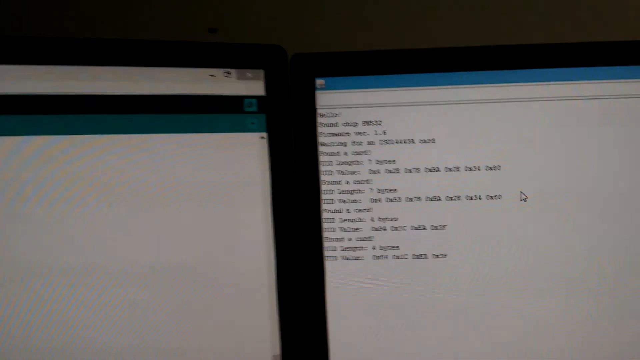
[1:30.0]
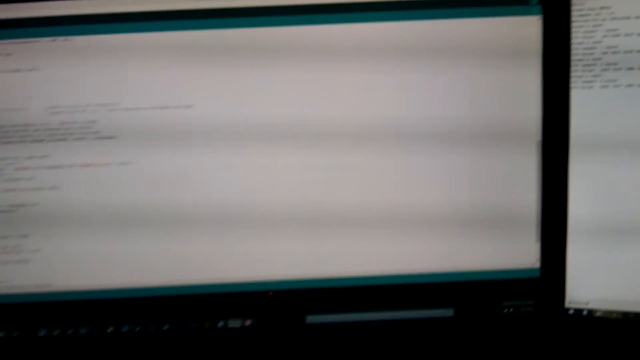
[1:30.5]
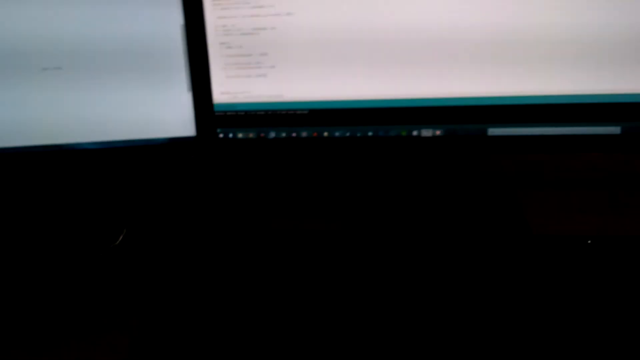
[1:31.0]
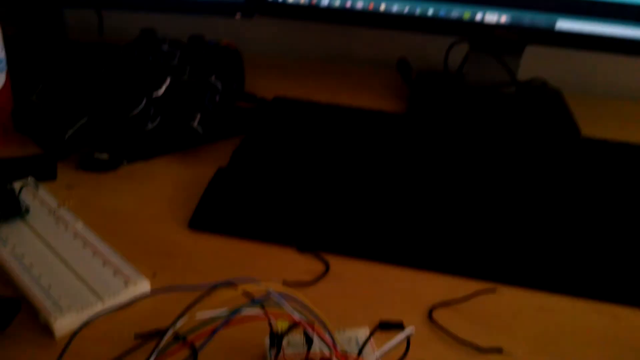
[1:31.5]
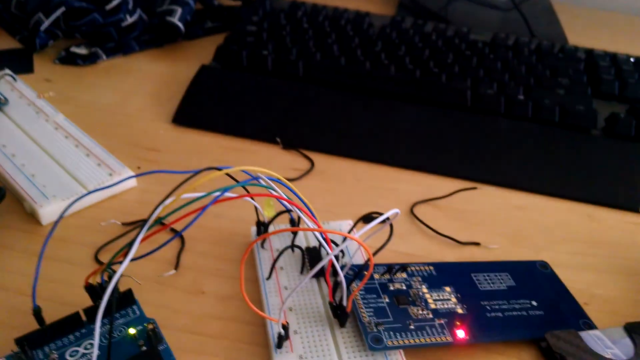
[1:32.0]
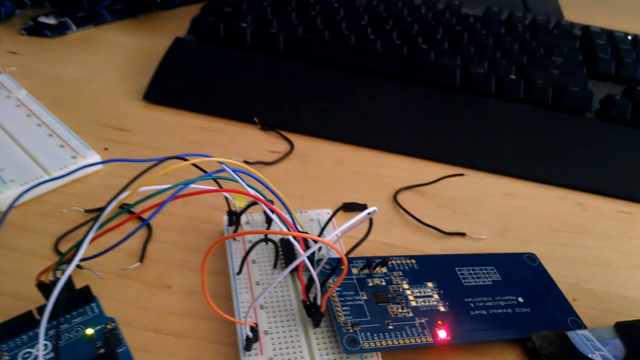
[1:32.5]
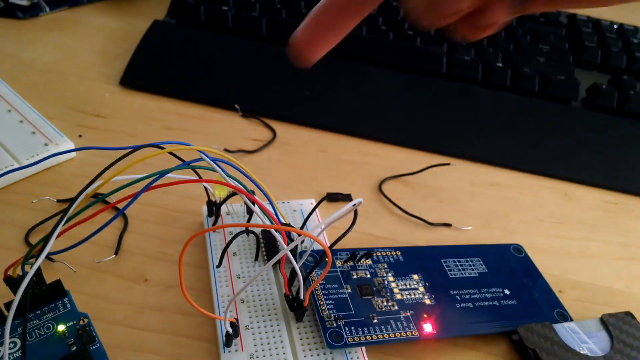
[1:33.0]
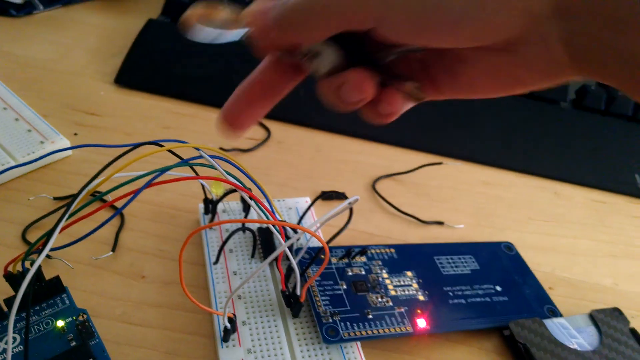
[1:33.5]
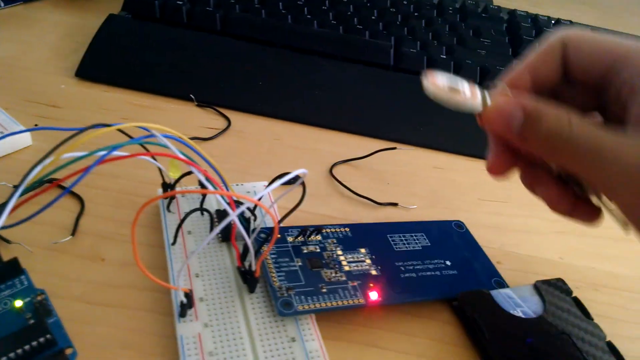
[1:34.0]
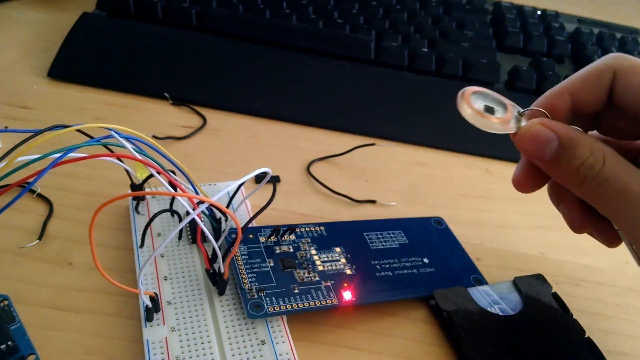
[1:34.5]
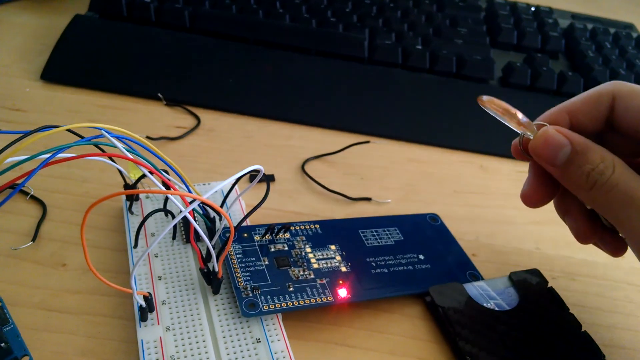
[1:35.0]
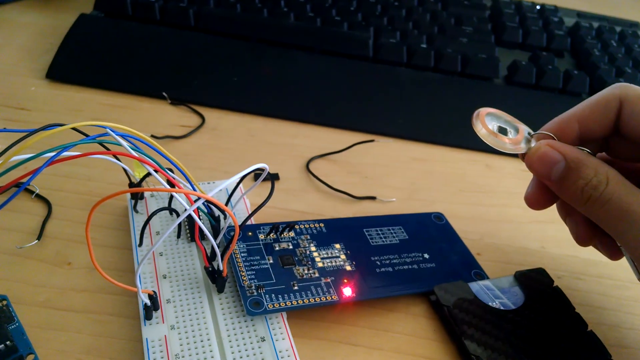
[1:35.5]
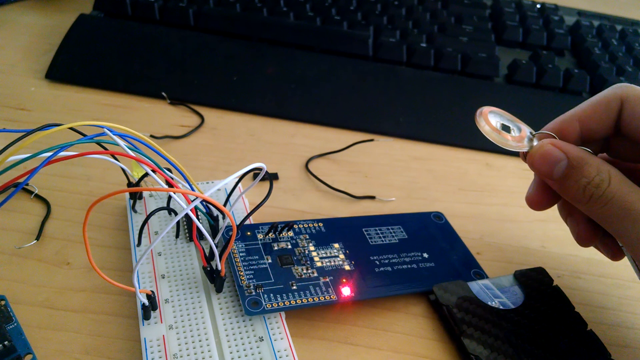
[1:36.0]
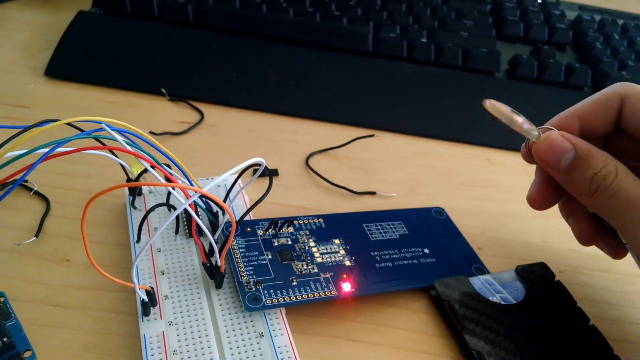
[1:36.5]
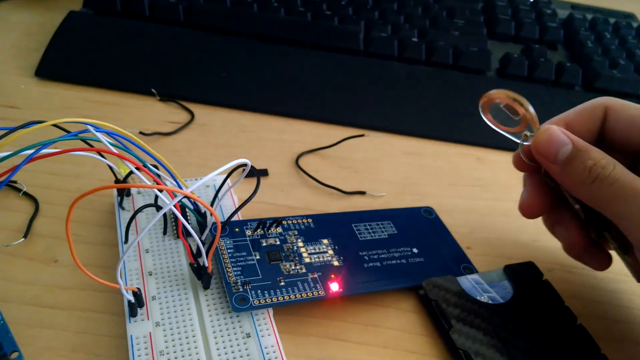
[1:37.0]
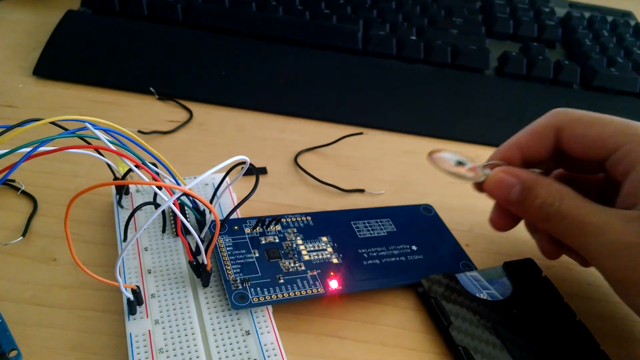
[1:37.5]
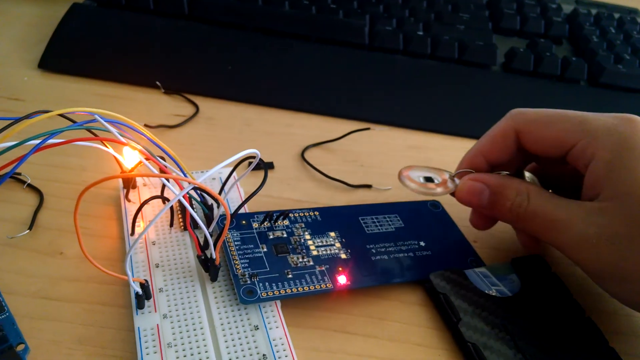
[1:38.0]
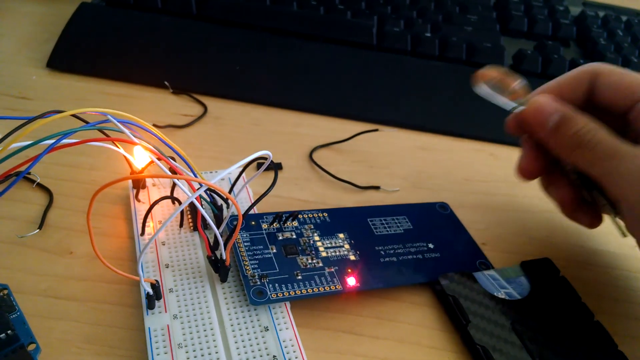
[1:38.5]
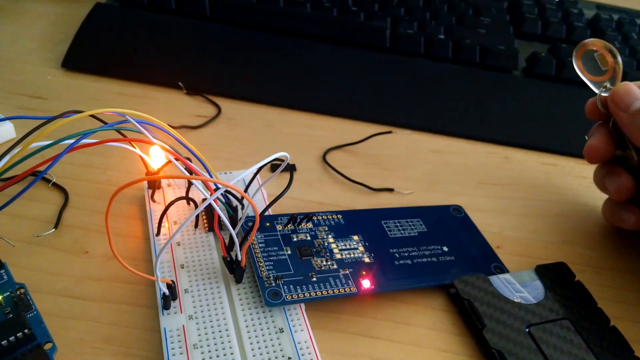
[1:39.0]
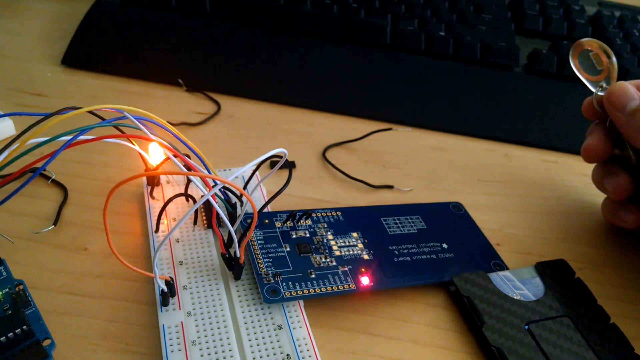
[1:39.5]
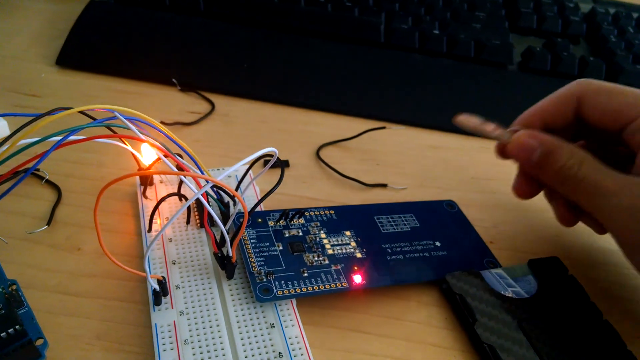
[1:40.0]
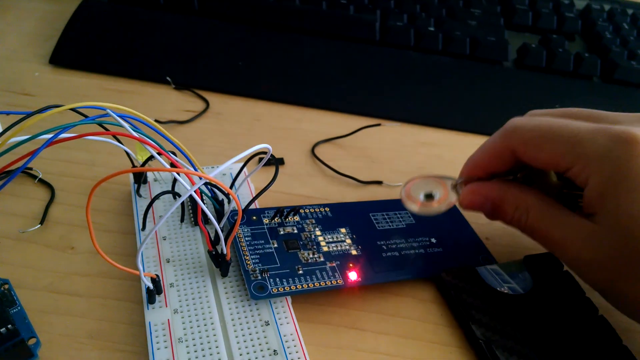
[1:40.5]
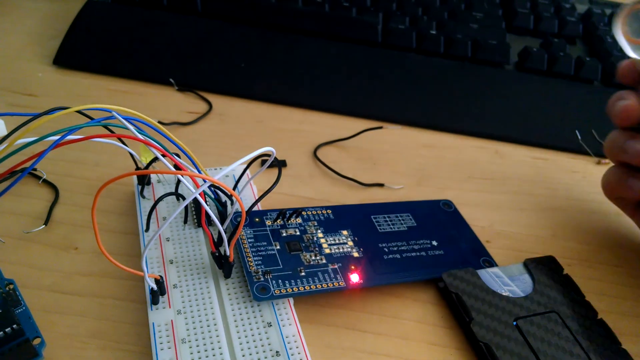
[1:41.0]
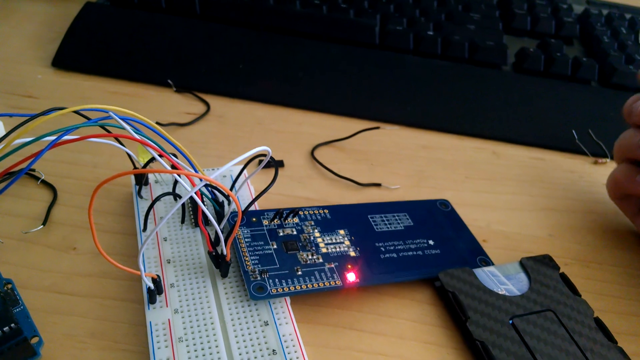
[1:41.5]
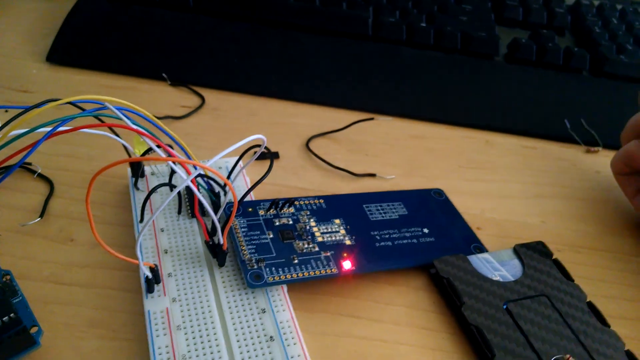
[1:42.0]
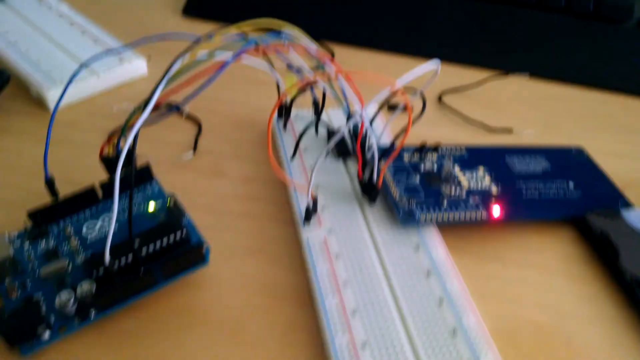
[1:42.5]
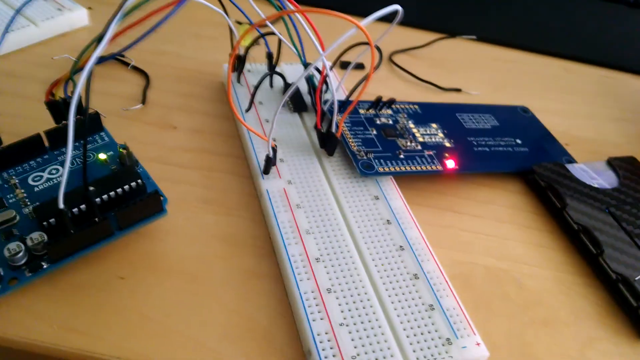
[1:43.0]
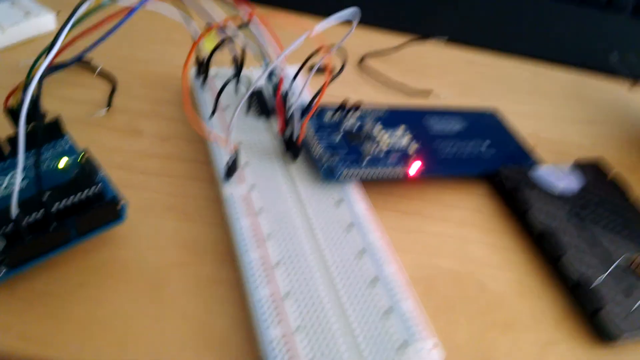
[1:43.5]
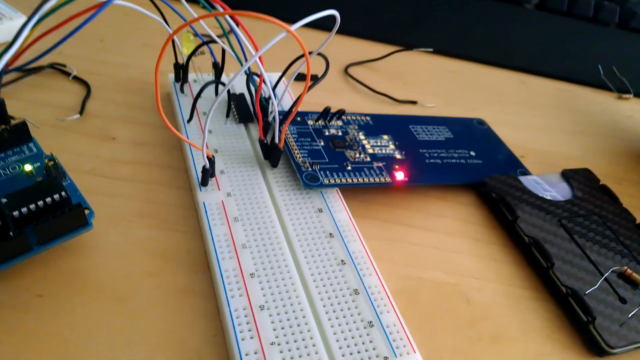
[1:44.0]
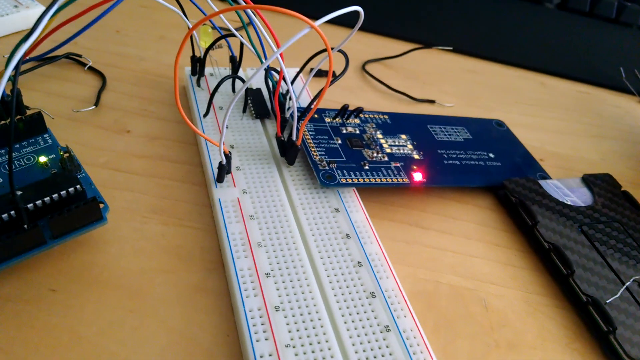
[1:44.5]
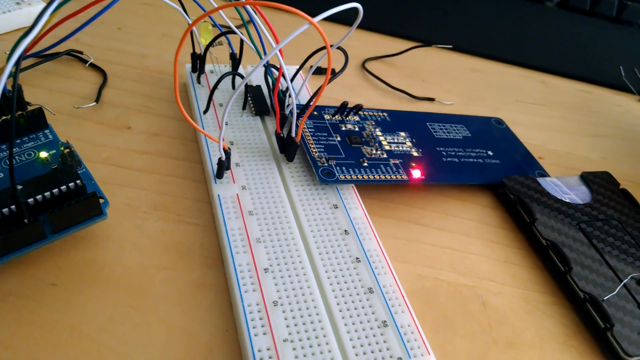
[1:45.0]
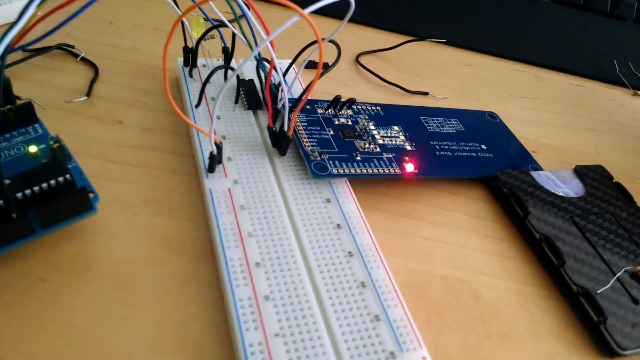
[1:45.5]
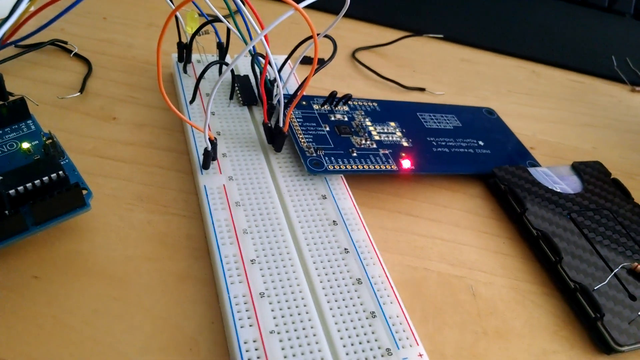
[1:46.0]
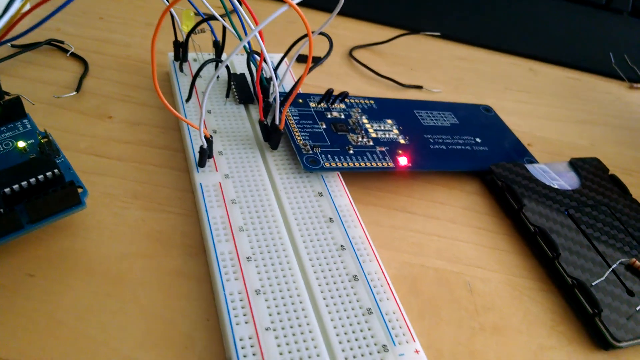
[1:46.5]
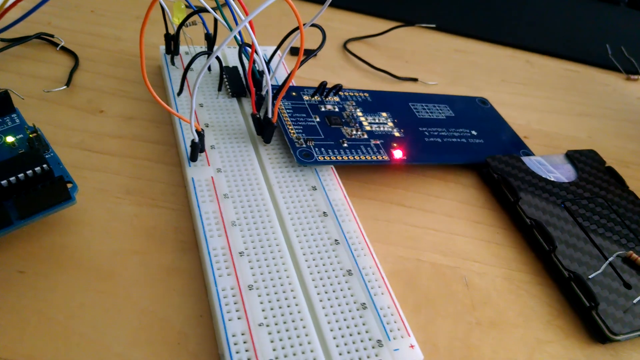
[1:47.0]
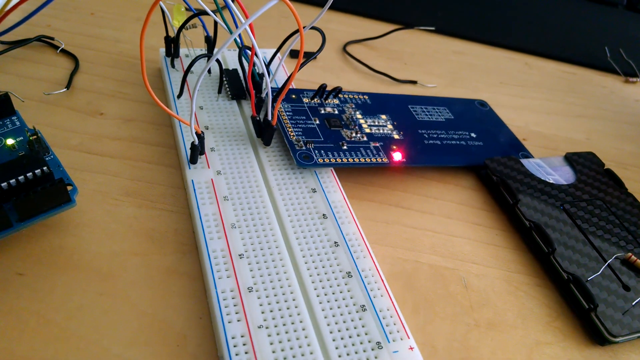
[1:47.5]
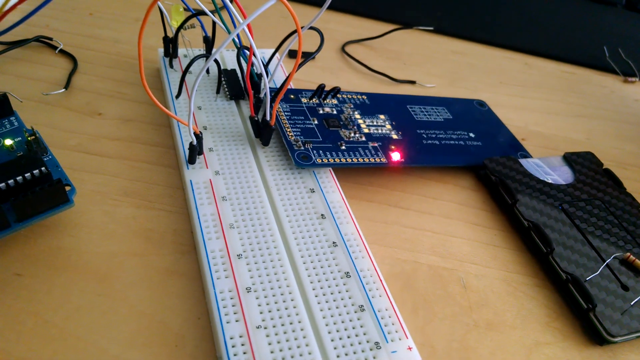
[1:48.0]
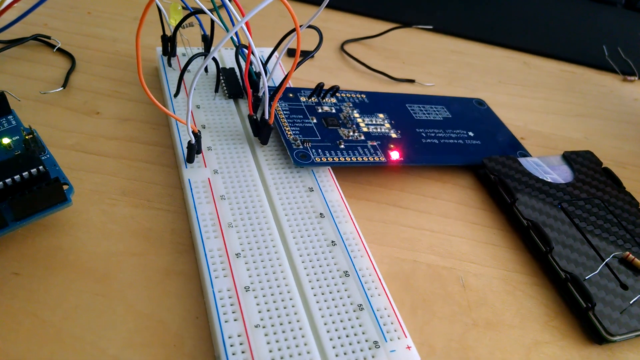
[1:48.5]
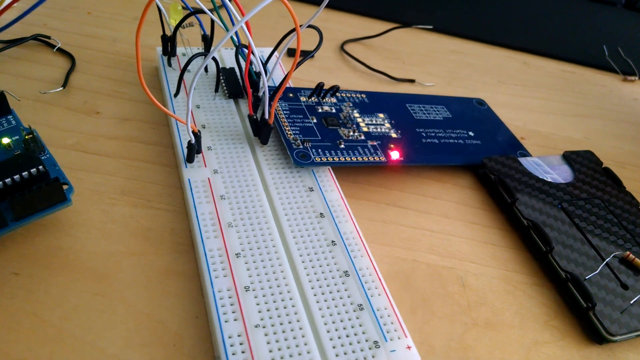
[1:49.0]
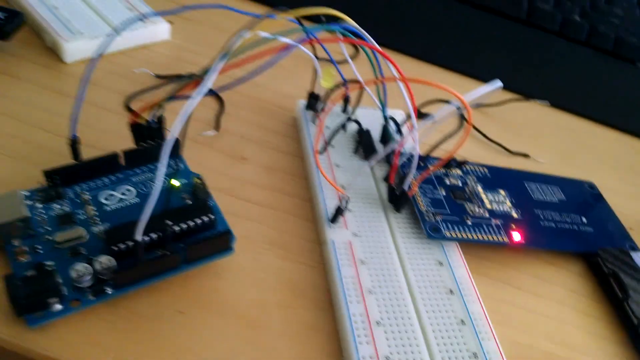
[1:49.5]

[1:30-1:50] The camera stays on the device while the person holds the keys. The device seems to react to a clear ring on the keys, which is translucent with a light red color in or around it and a black chip in the middle, apparently what is used to scan. He moves it down toward the chip with the red light, and that appears to be what causes the screen to show "found a card".